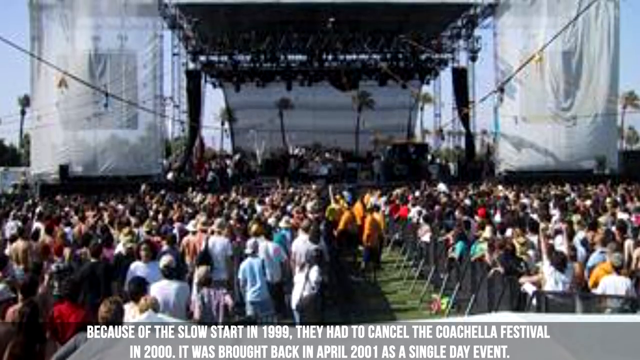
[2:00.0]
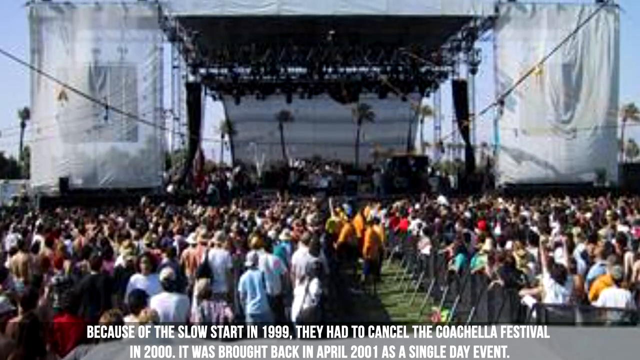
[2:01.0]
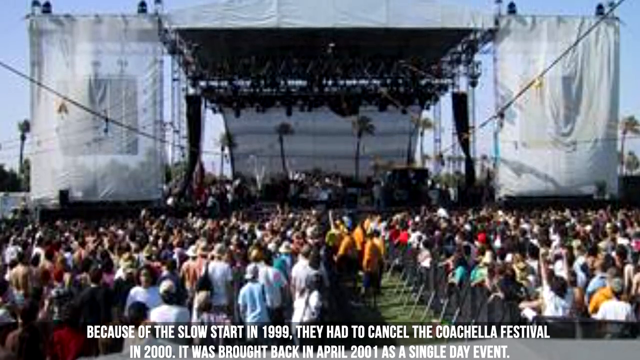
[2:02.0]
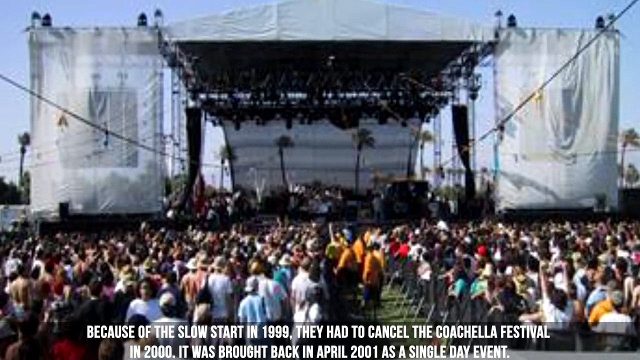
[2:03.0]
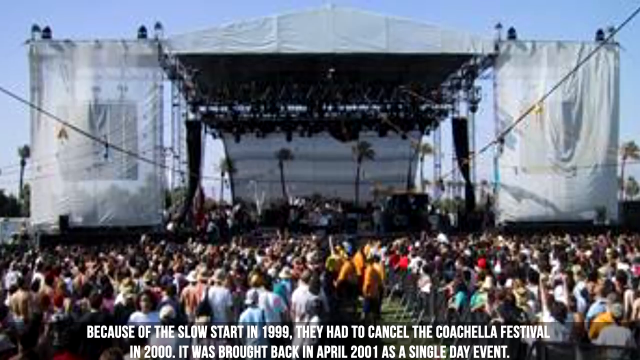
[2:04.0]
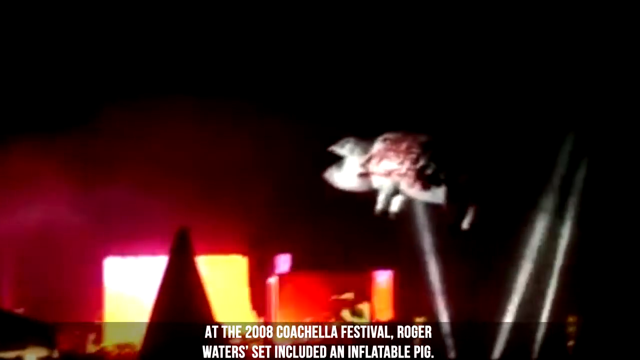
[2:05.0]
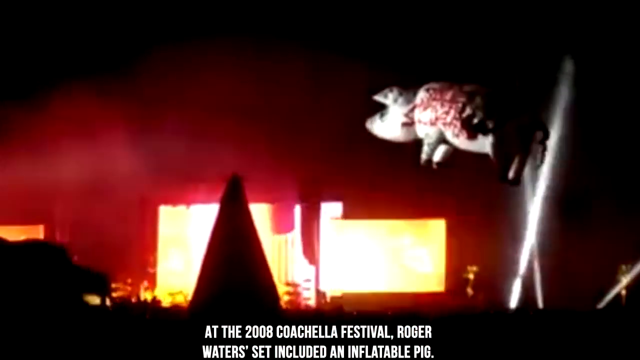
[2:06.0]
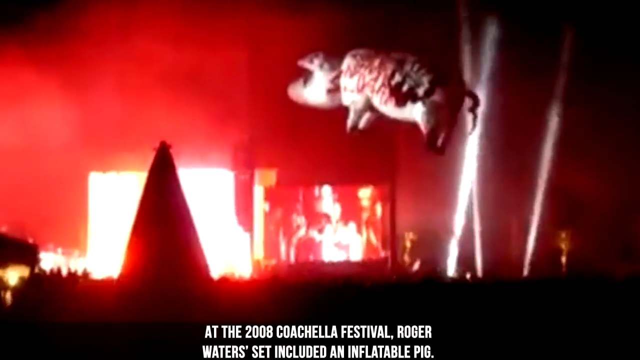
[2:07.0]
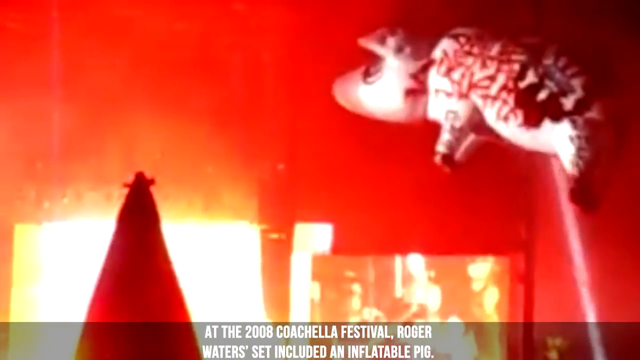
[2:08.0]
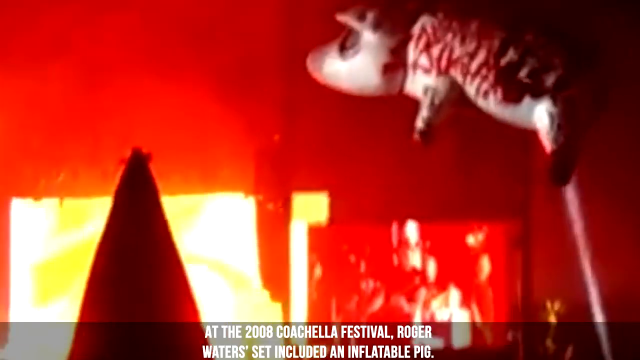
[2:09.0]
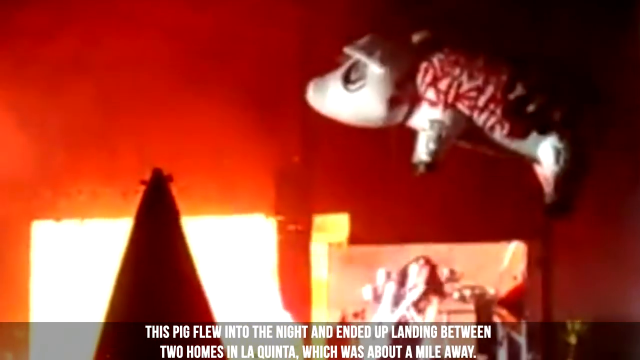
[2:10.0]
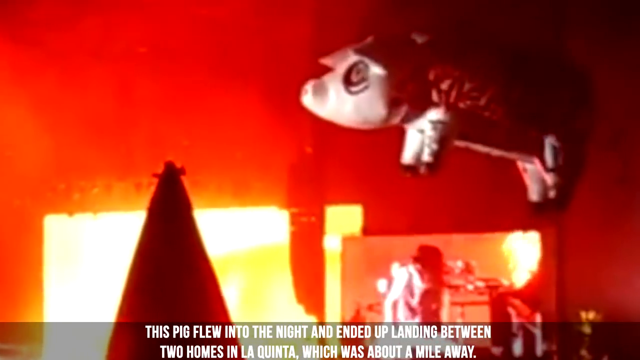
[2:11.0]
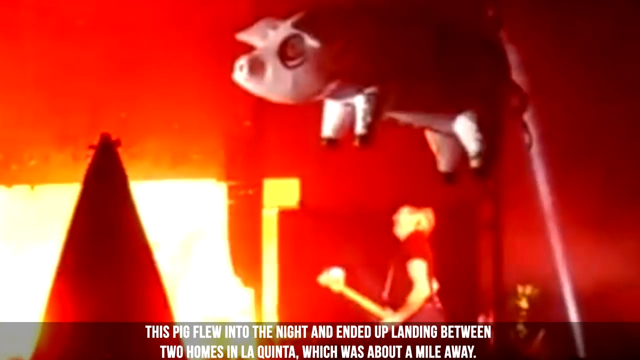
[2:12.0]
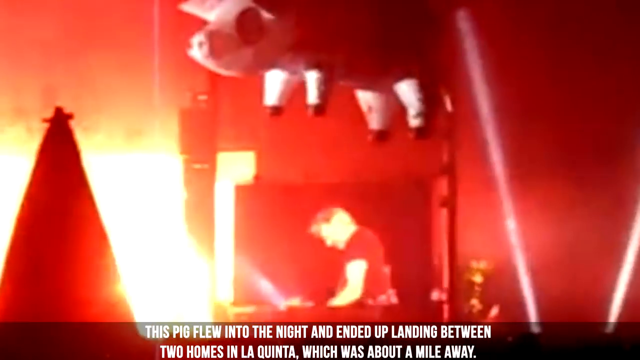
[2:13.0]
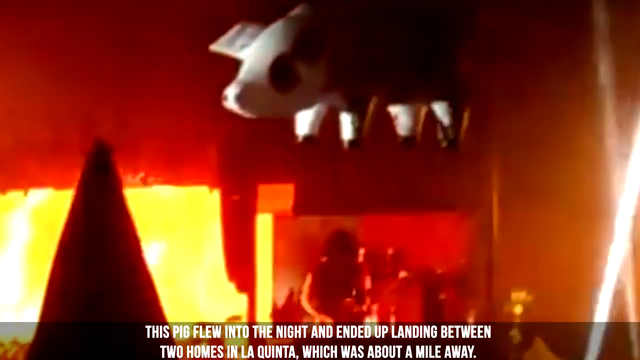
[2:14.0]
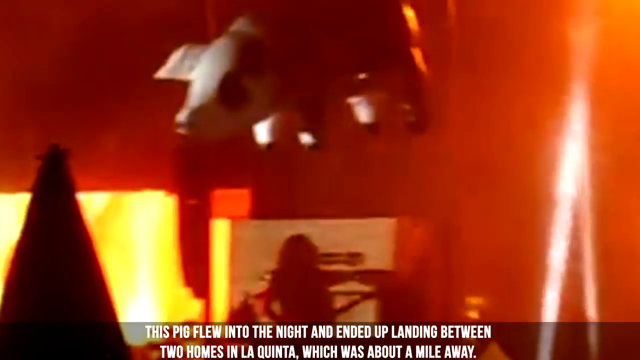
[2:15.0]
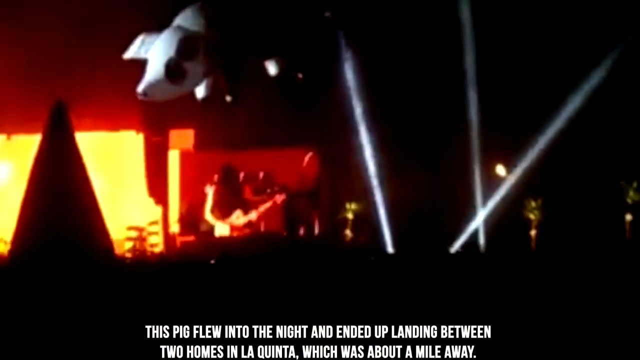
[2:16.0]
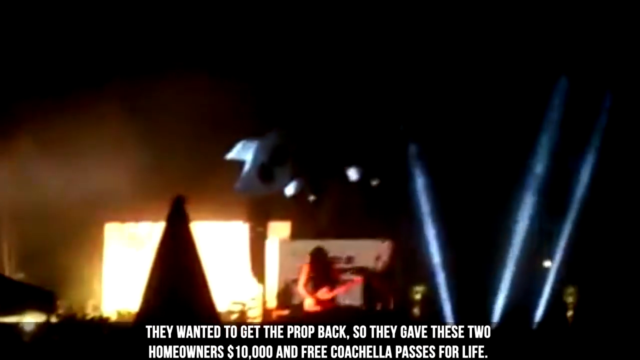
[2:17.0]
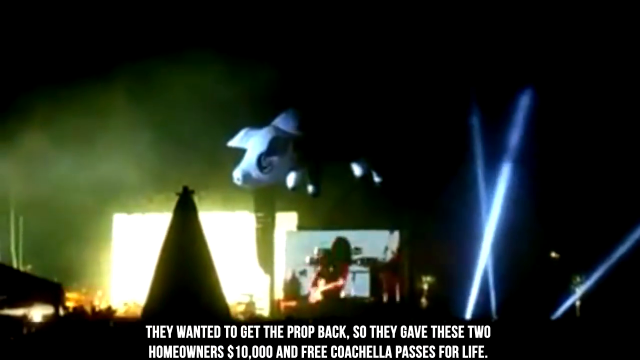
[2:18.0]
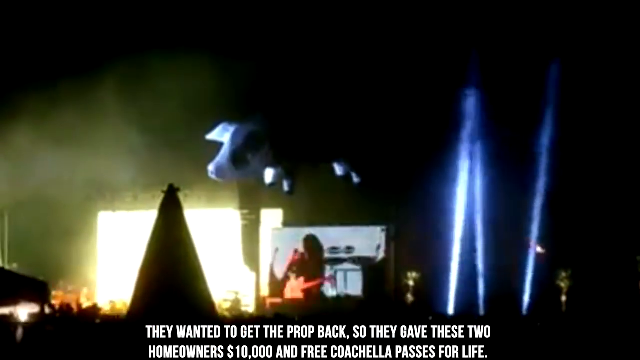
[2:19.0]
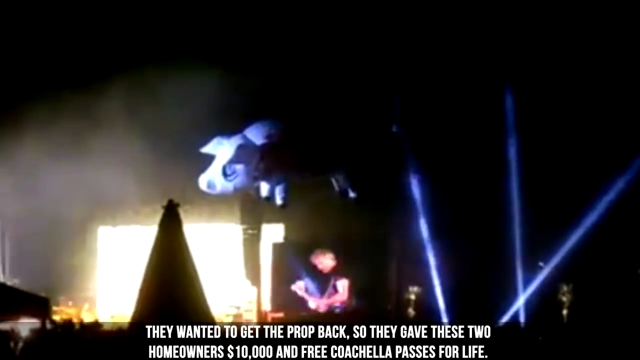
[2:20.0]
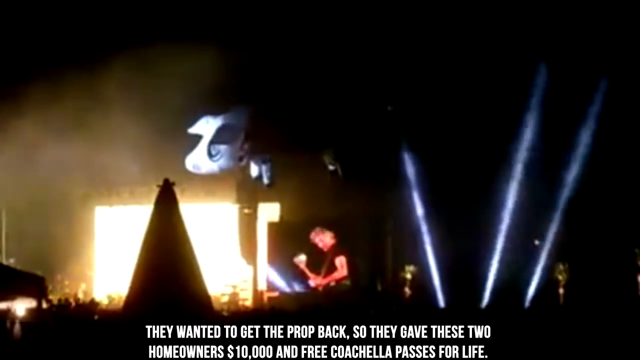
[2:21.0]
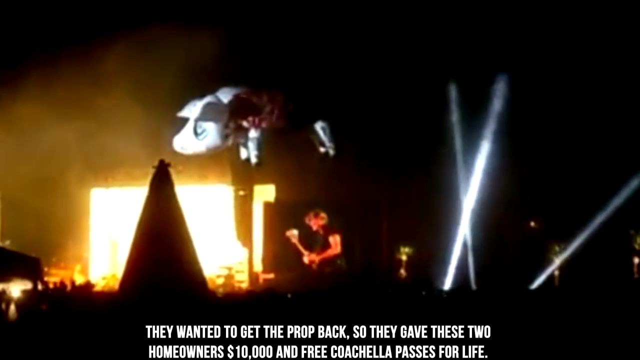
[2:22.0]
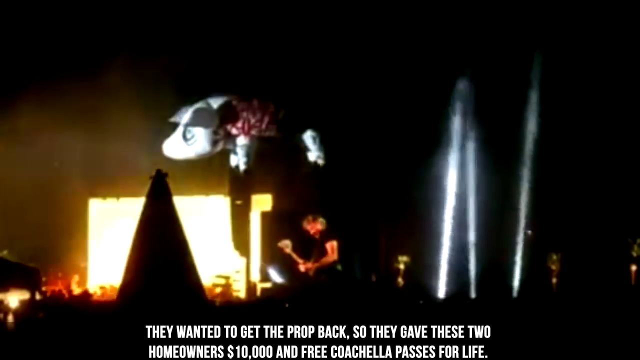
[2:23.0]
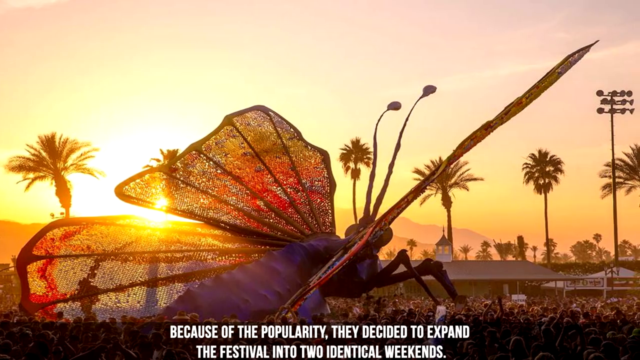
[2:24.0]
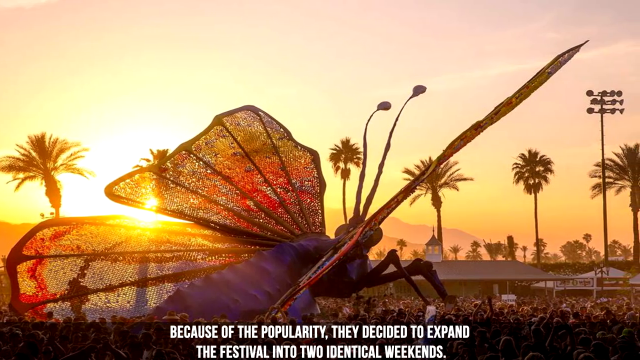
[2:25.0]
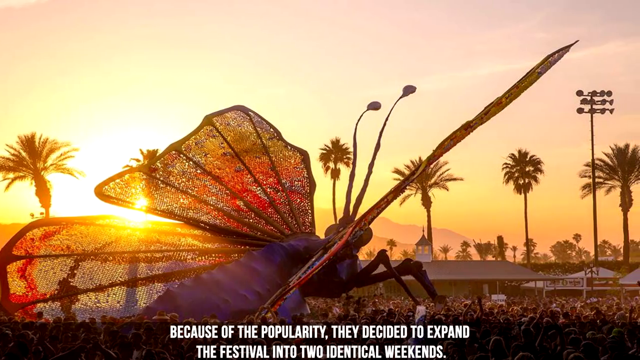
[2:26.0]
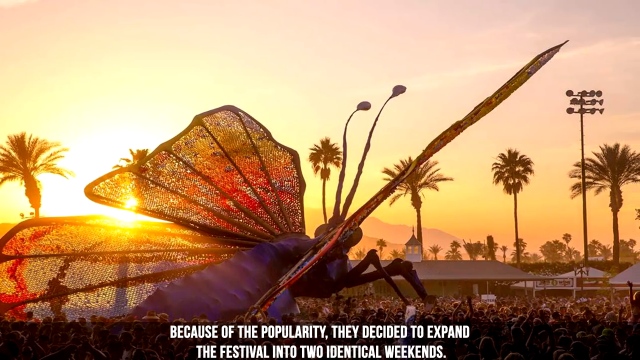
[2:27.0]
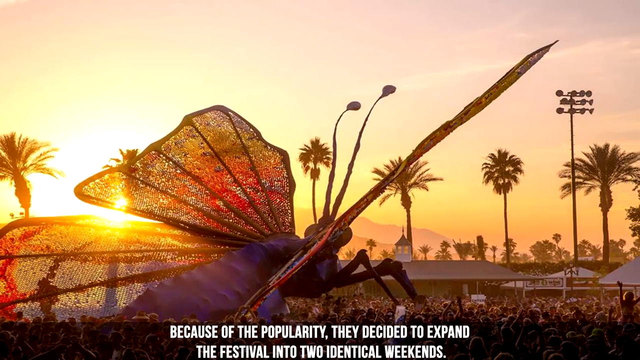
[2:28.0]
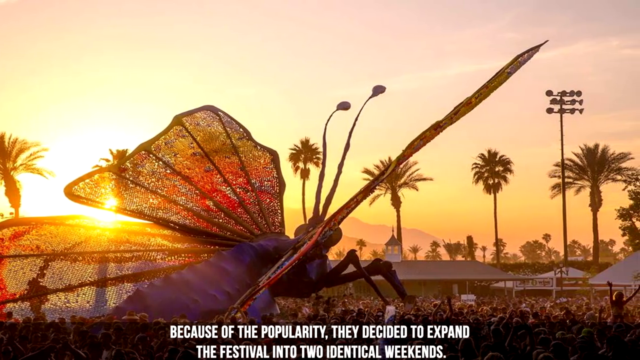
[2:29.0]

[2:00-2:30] The image shows a crowd in front of a black stage, with sound equipment and lights clearly visible at the top and what look like white cloths on the left and right sides, perhaps over the front of giant video screens. Crowds are to the left and right in front of the stage, almost in pens, and along a space down the centre of the crowd people in yellow t-shirts or sweater tops parade or supervise. A cut leads to a moving image with text at the bottom reading "at the 2008 Coachella Festival". The view seems to be a fan's view of the stage: lights on the screen on stage flash with lots of reds and purples, and lights beam up from the stage. In the air is what looks like a giant inflatable, perhaps a pig, though it is hard to see. Text reads "this pig flew into the night and ended up landing between two homes in La Quinta which was about a mile away". Underneath the inflatable is a giant video screen showing what looks like a guitarist; everything is quite blurry and the image is dominated by shining lights. A cut leads to a still image of either a close-up of an insect or a giant replica insect: a dragonfly with a purple body and three visible wings that look made of a sort of diamond material with reds and greens in it. In the background the sun is setting and there are trees. Text at the bottom reads "because of the popularity they decided to expand the festival to two identical weekends", and a cut leads to an image of the ferris wheel that has been prominent in many of the images.